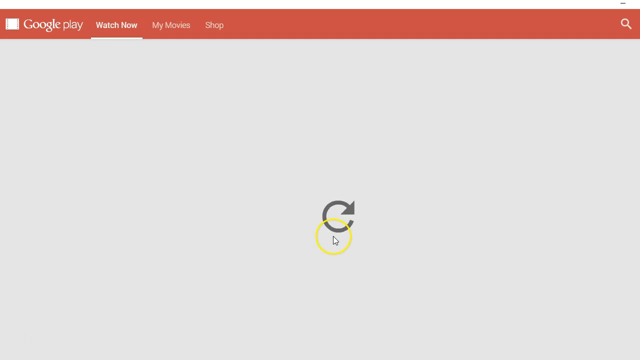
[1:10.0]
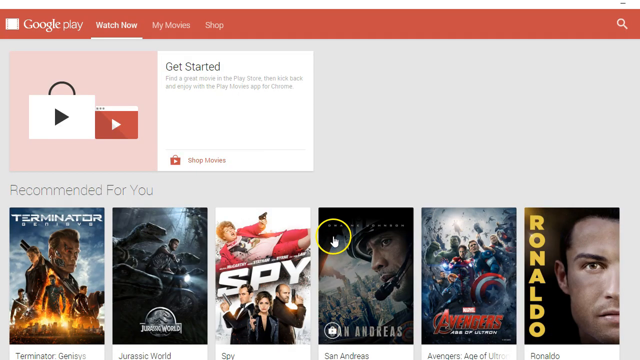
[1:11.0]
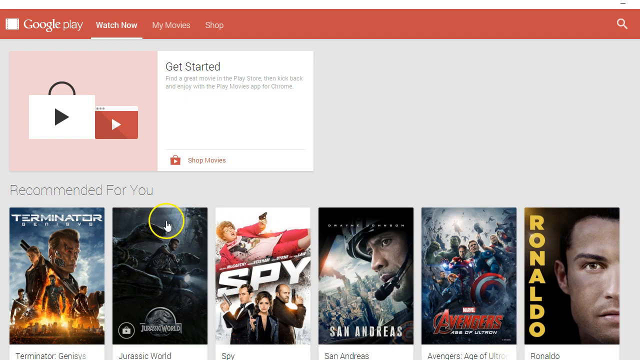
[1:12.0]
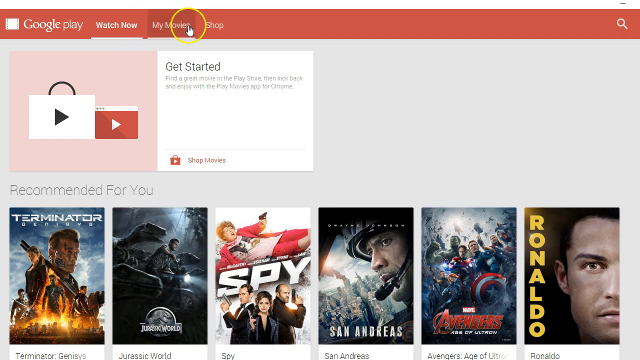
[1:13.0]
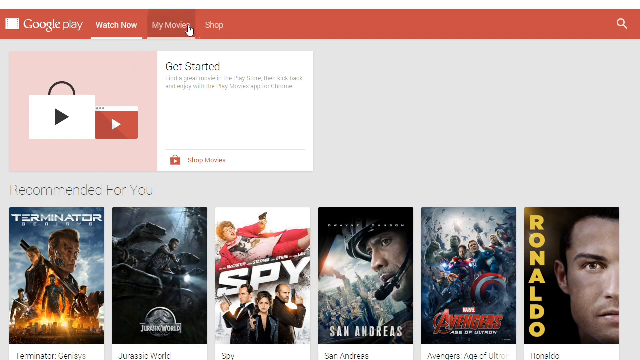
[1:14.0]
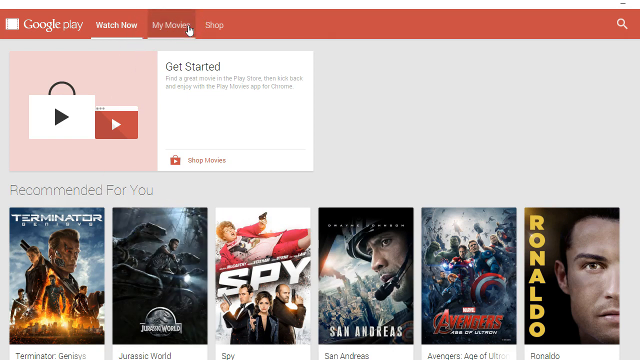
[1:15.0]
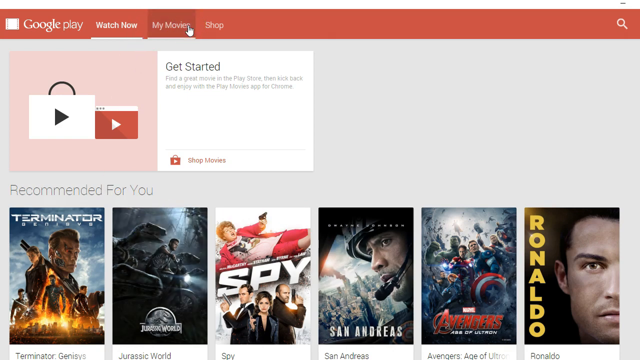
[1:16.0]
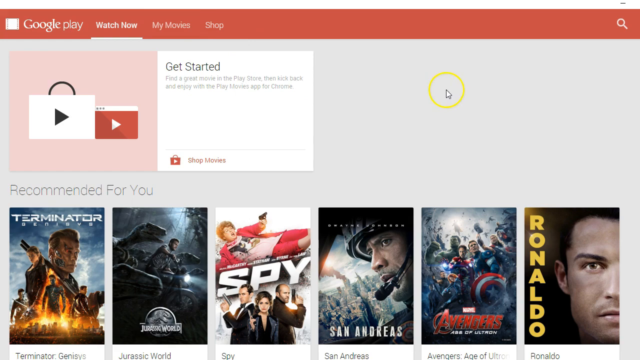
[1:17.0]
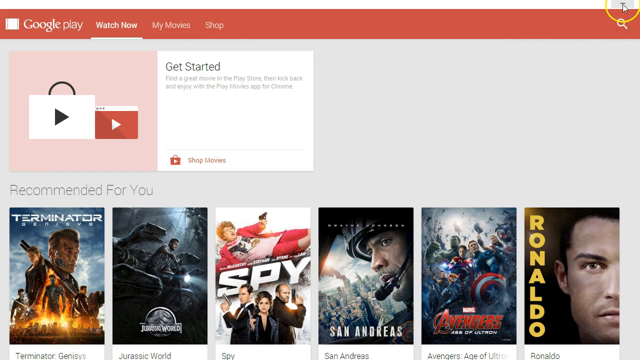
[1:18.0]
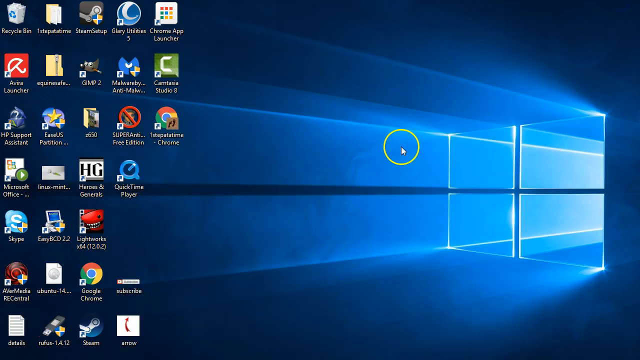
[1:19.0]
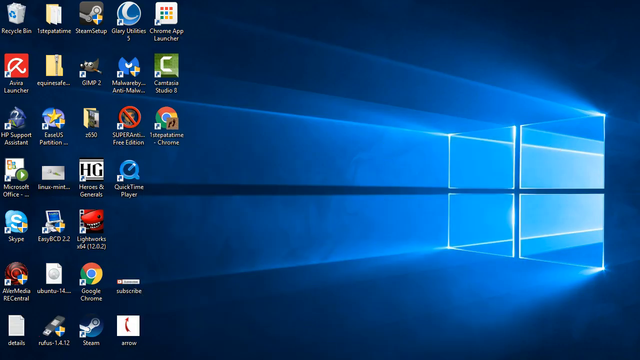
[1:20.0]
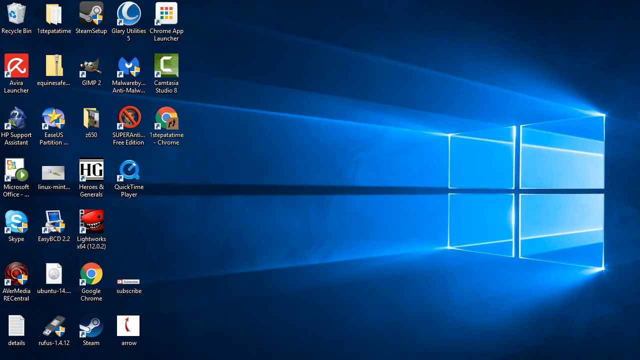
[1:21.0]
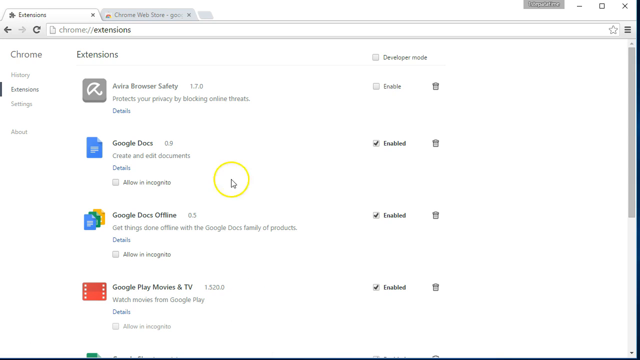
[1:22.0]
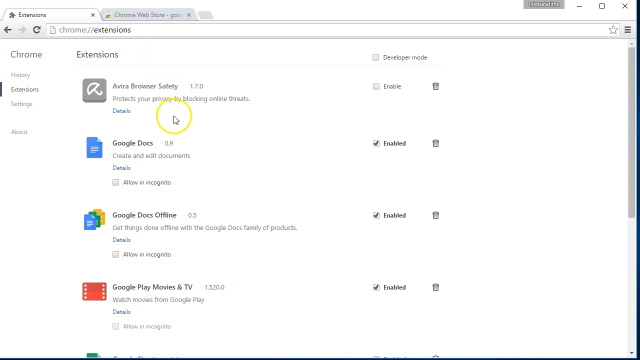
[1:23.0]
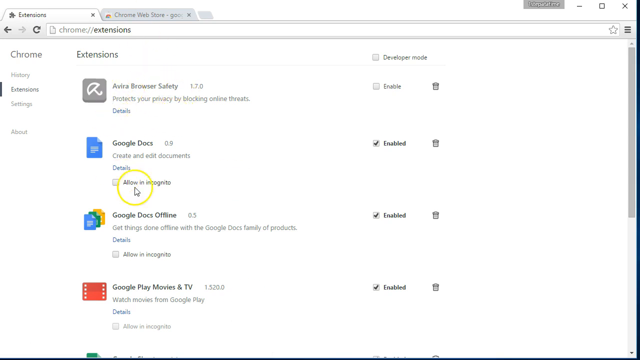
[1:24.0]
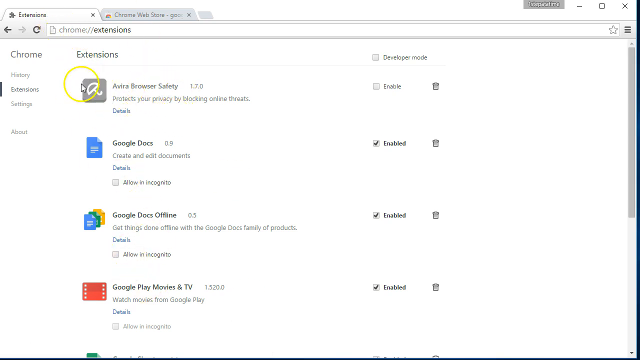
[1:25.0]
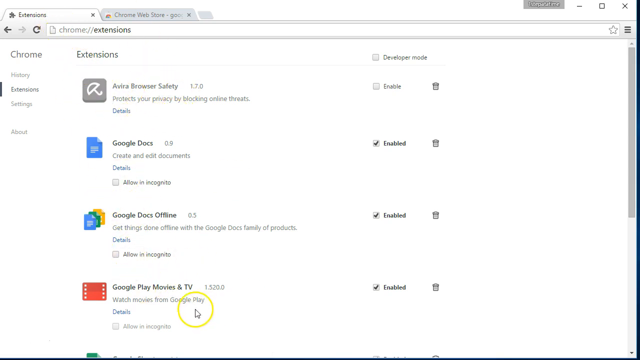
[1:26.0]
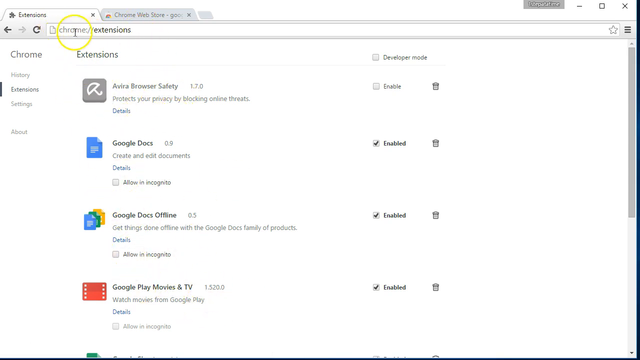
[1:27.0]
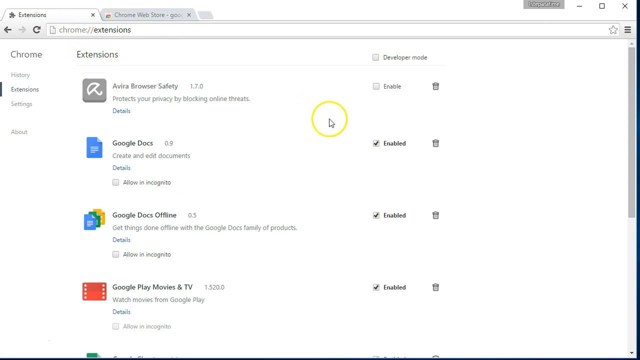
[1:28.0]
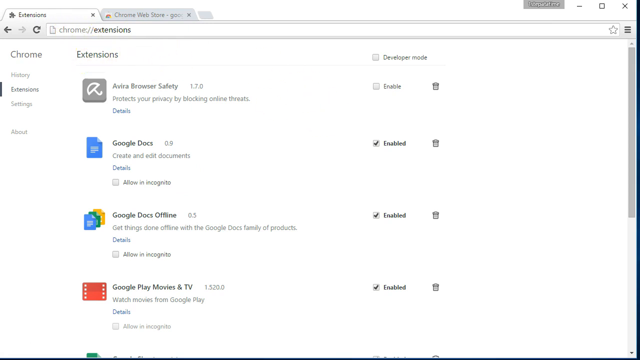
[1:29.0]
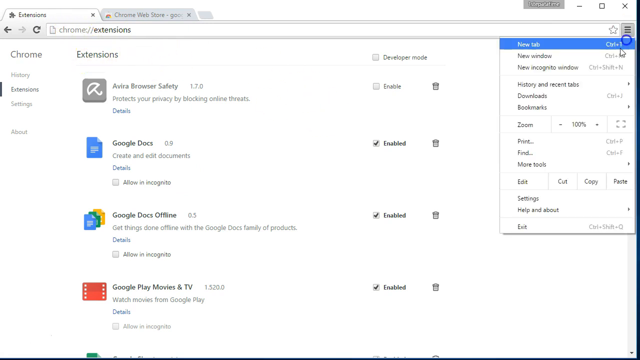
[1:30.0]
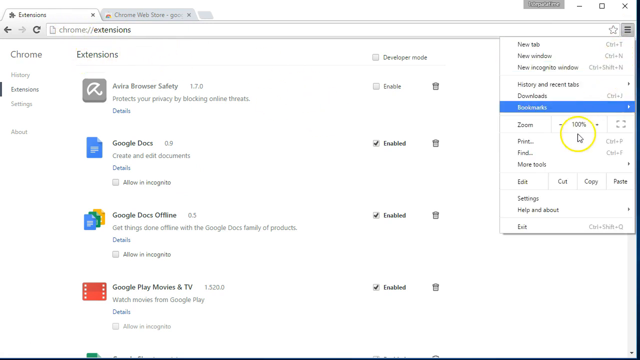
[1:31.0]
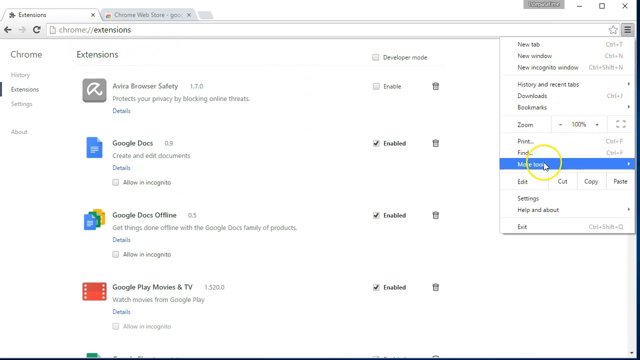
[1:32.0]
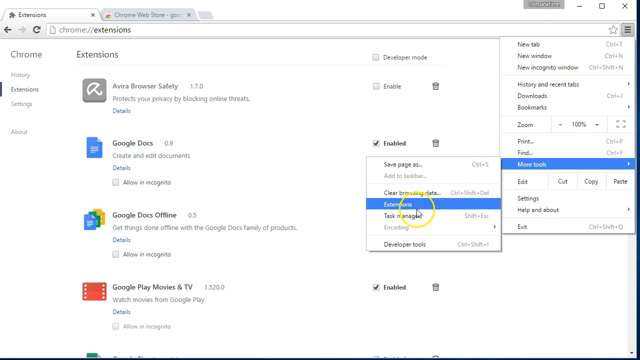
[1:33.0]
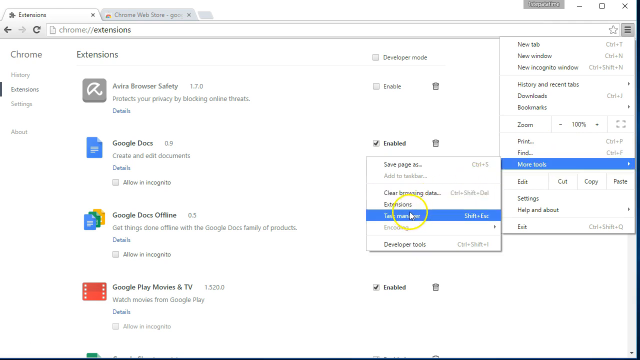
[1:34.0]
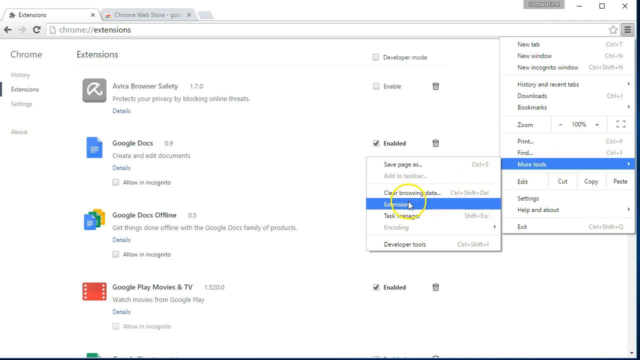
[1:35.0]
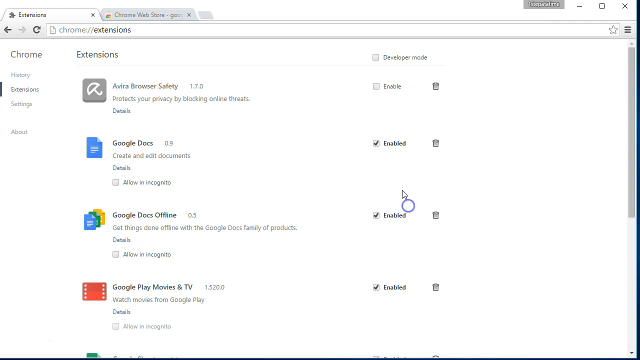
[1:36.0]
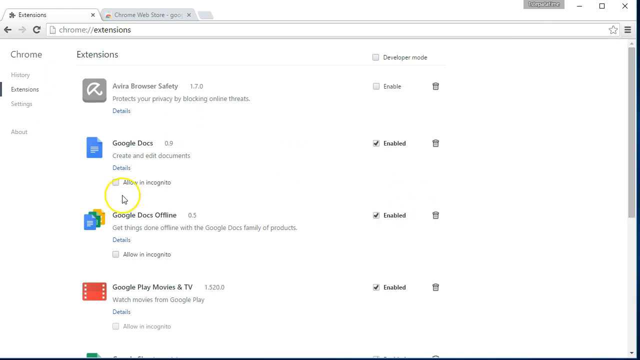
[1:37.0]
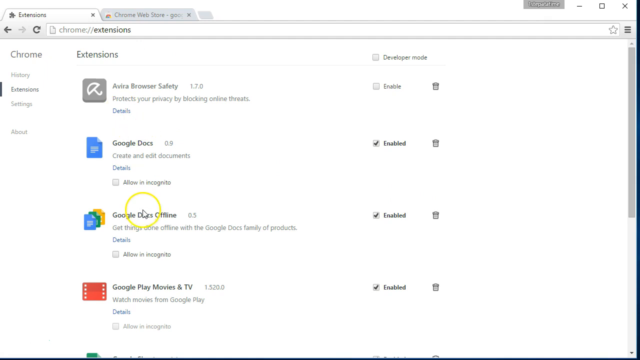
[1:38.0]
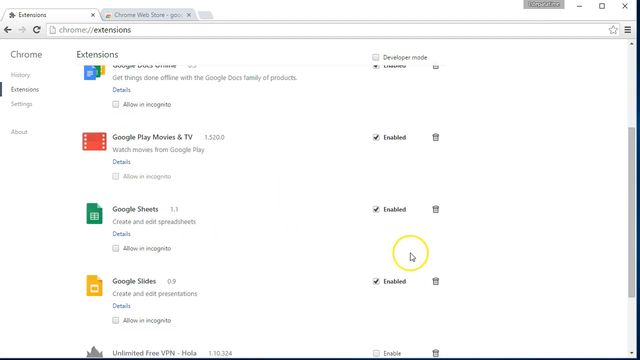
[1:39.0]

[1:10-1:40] A Google Play window is open. The navigation bar along the top has a red background with white writing, and a white hand cursor hovers over a "My Movies" link on it. Under it is a white pop-up box reading "Get Started". Below is a row of six movie images in a section labeled "recommended for you". The cursor moves across the top to the right-hand corner and clicks the close button, briefly revealing a desktop with a blue background before a different window comes up: the extensions tab of a Google Chrome app, showing a list of extensions. The cursor hovers over the Google Play Movies and TV icon at the very bottom of the screen, then moves all the way up to circle over the address bar reading "Chrome extensions". It moves to the settings icon on the far right of the address bar and clicks, opening a pop-up list menu of options. The cursor moves down the list and selects a submenu labeled "more tools", which is highlighted in blue, and the submenu pops up to the left of the settings menu. The cursor selects "Task Management", which is then highlighted in blue.